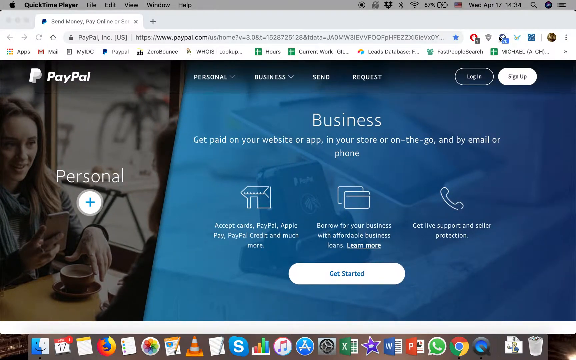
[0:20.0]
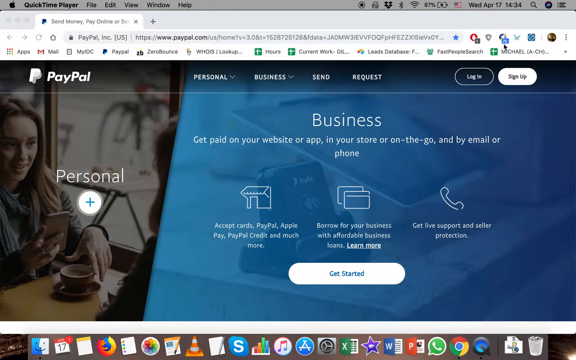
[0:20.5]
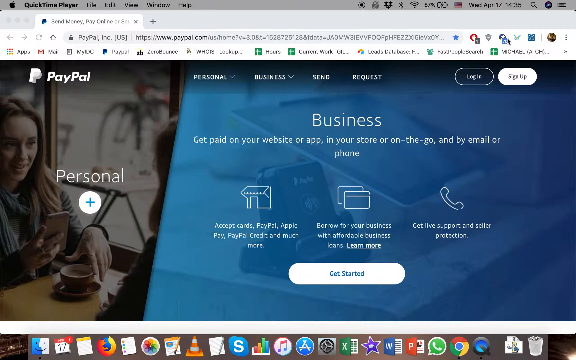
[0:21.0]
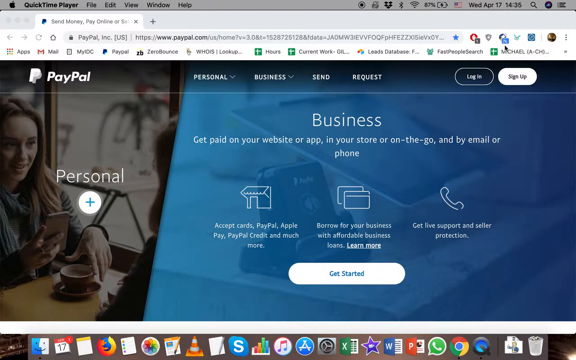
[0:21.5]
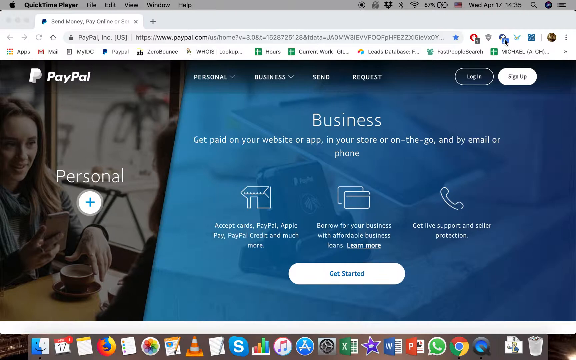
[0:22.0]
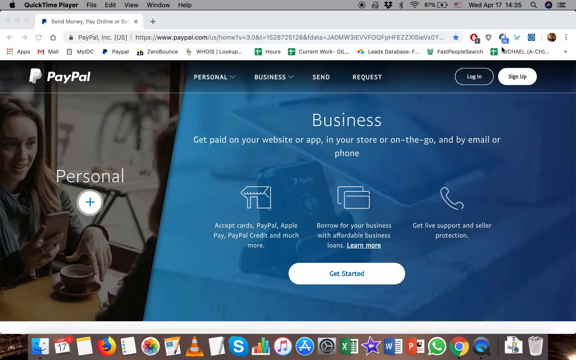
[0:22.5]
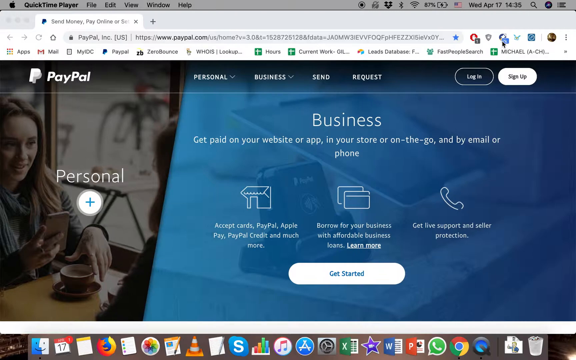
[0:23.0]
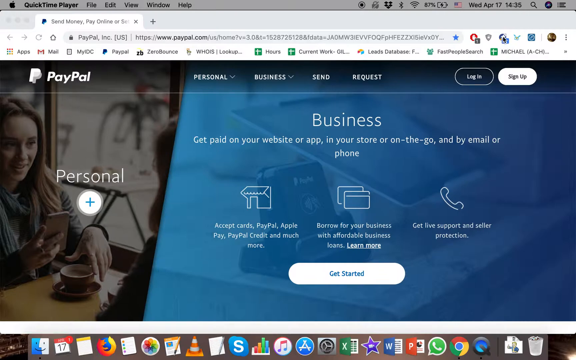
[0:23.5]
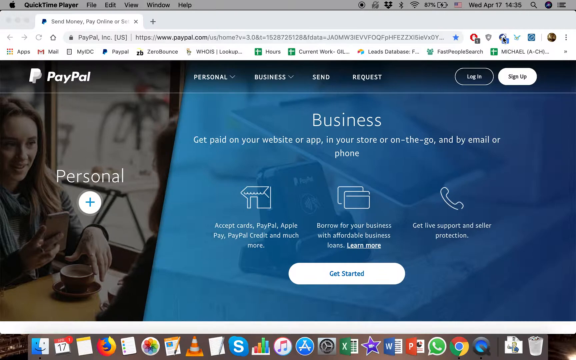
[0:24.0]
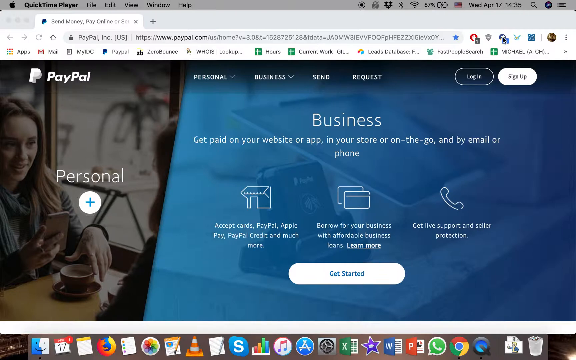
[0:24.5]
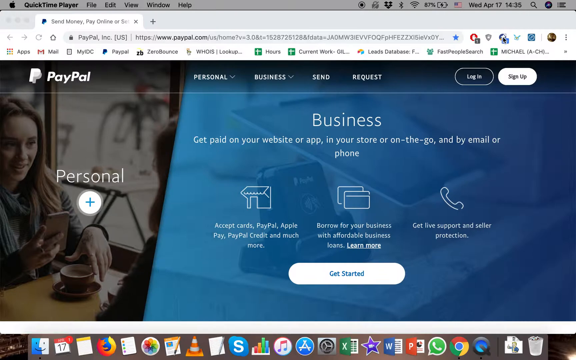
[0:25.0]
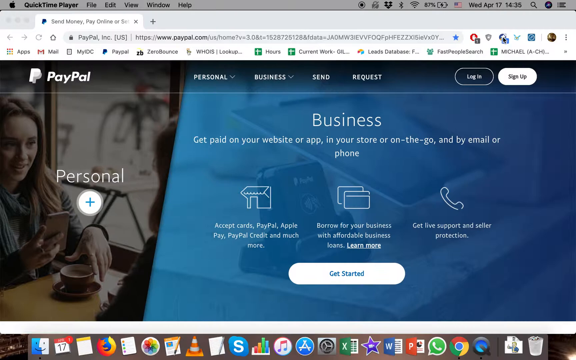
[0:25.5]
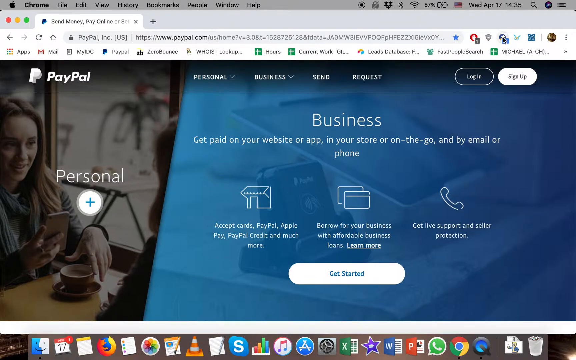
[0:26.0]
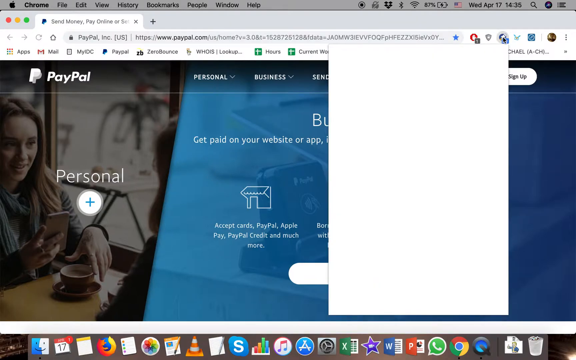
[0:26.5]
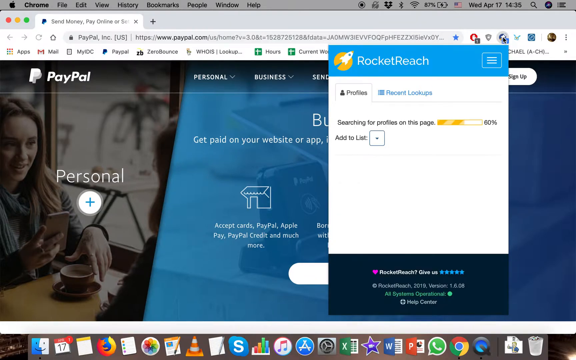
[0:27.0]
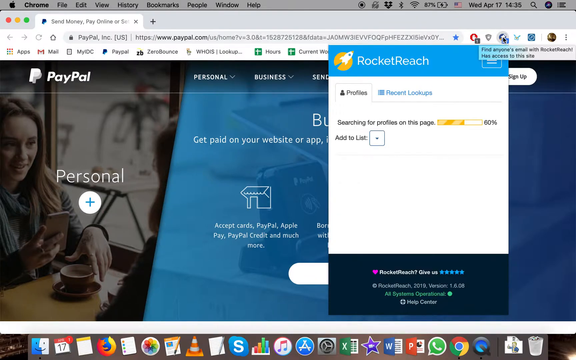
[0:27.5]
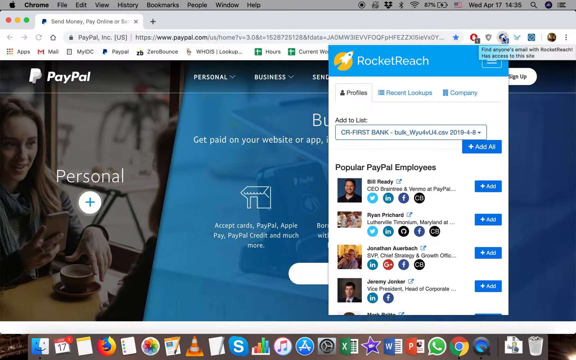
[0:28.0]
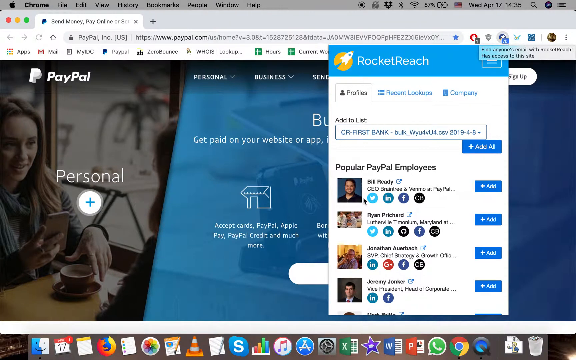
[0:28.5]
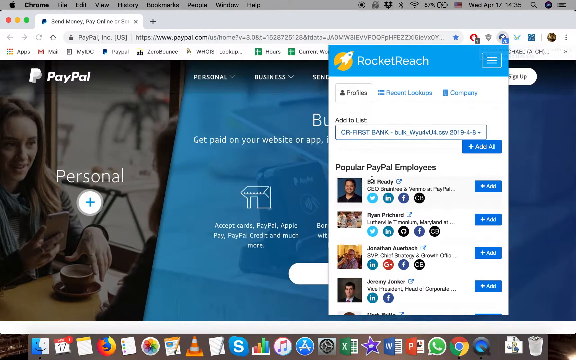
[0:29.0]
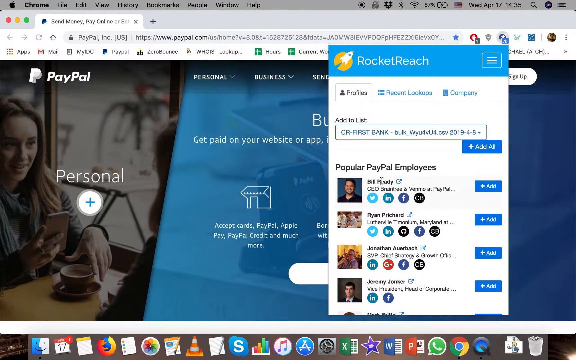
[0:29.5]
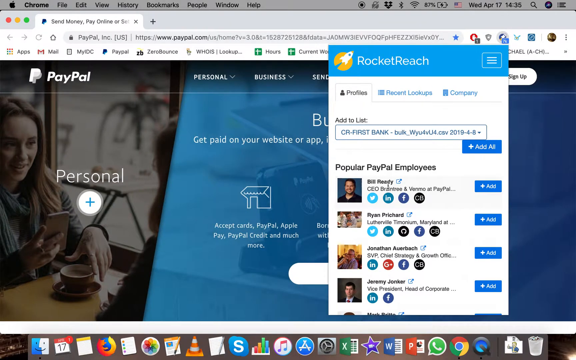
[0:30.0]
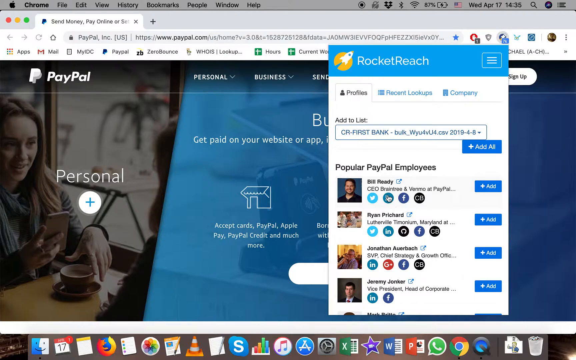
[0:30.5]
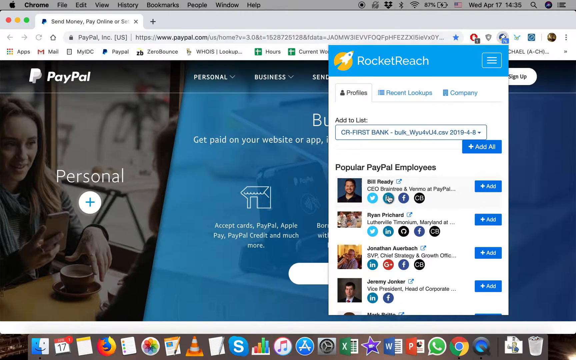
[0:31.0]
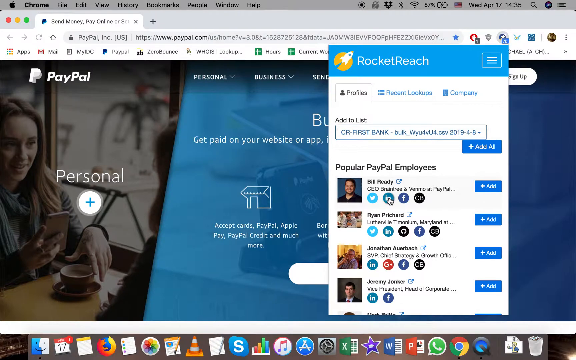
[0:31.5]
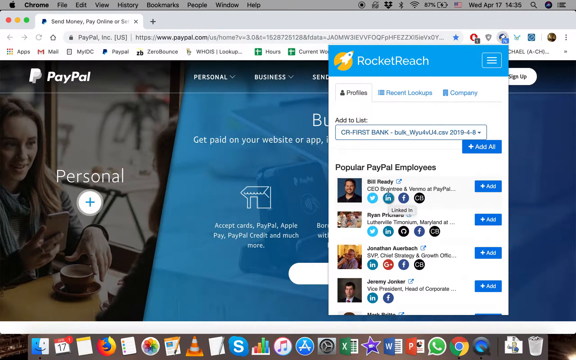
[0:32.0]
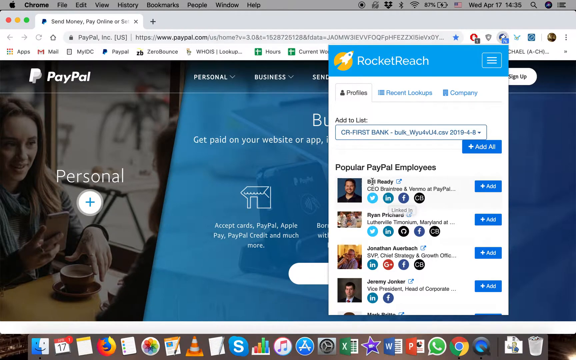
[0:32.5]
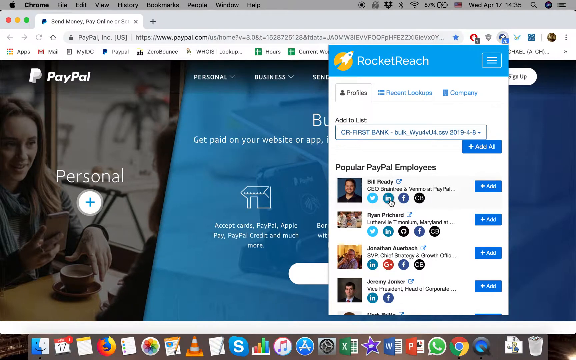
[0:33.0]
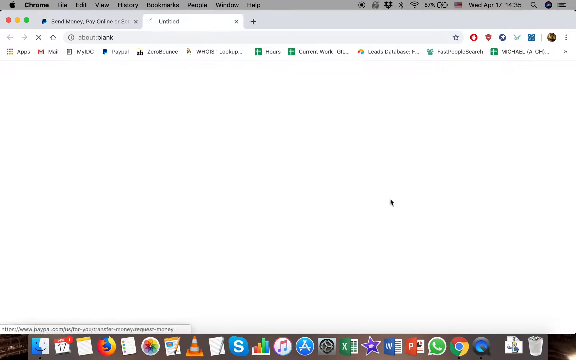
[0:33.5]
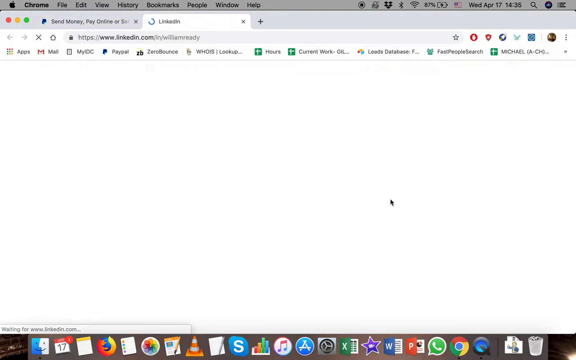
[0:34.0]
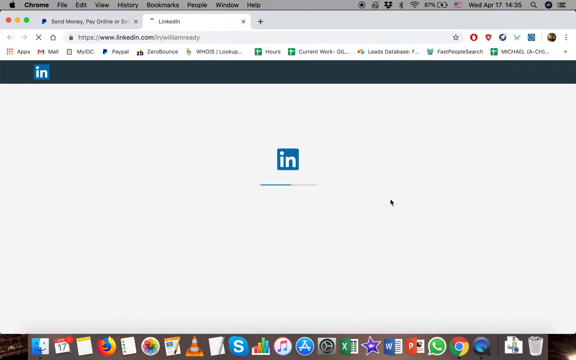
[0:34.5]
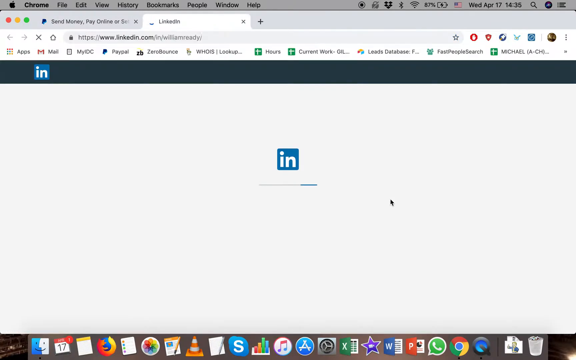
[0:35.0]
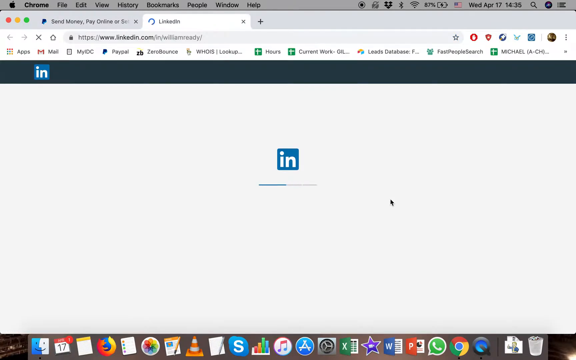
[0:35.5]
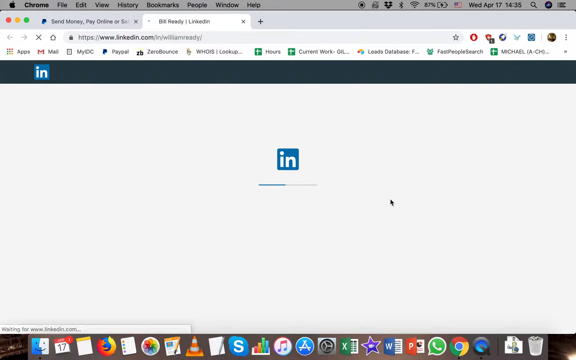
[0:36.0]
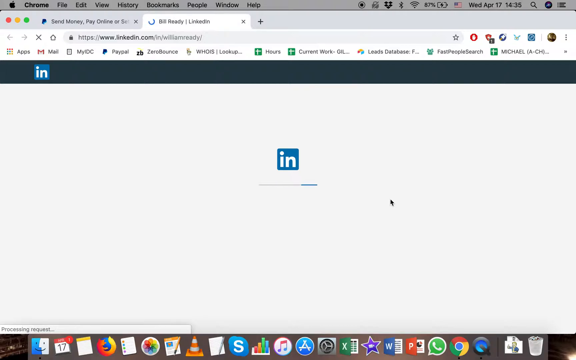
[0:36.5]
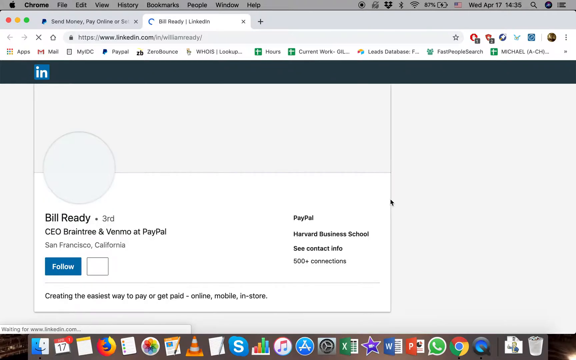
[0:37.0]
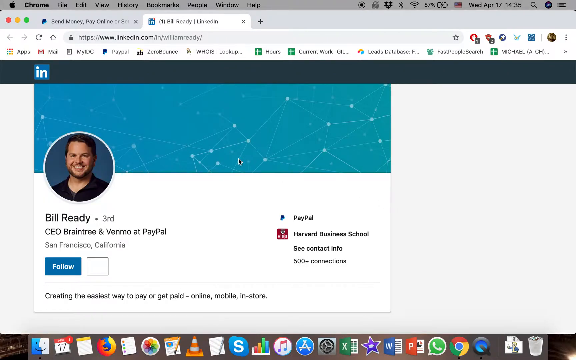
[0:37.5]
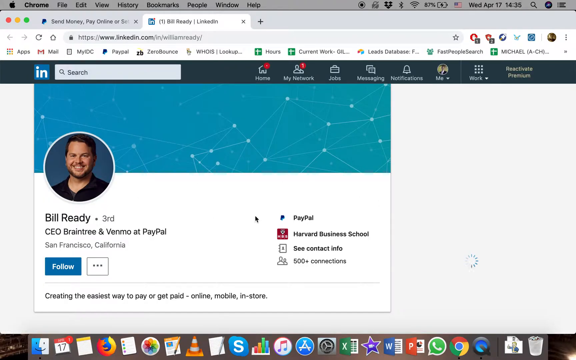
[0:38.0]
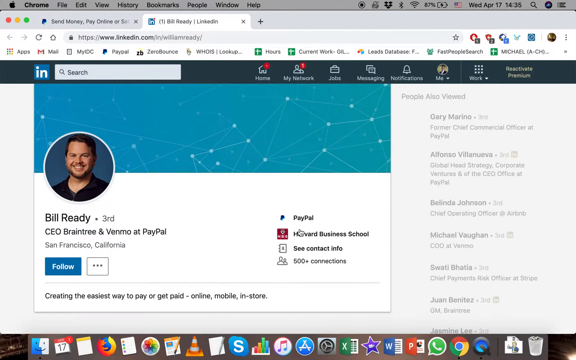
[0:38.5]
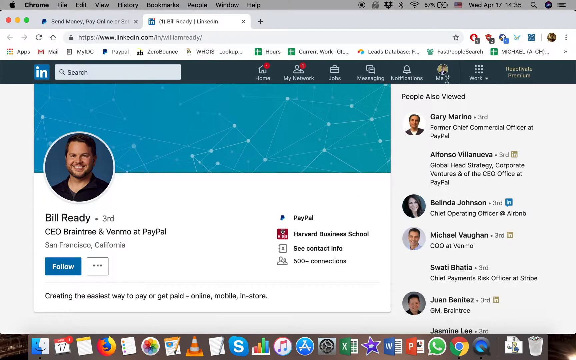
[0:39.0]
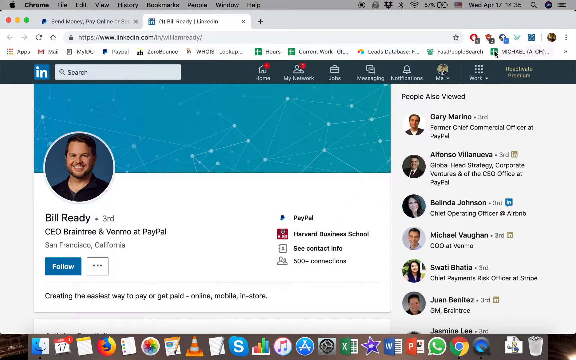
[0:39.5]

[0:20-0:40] The screen recording continues on PayPal.com's homepage, not logged in. The user seems to have interacted with an element that expands the business section, which reads "business, get paid on your website or app, in your store, or on the go, and by email or phone. Accept cards, PayPal, Apple Pay, PayPal Credit, and much more. Borrow for your business with affordable business loans. Get live support and seller protection." At the bottom of the section is a large white button reading "get started" in blue font. The user moves the mouse cursor over various bookmarks built into the browser, circles the cursor around one of them, and clicks it, showing that the bookmark is an extension for Rocket Reach. It performs a quick search and then shows a list of profiles labeled "Popular PayPal Employees." The user mouses over the top result, which reads "Bill Ready, CEO of Braintree and Venmo at PayPal," then over one of four social media links shown: Twitter, LinkedIn, Facebook, and one with the initial CB. They click the LinkedIn icon for Bill Ready, opening the LinkedIn web page.